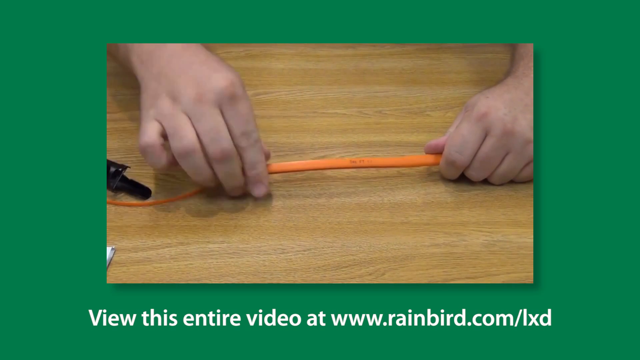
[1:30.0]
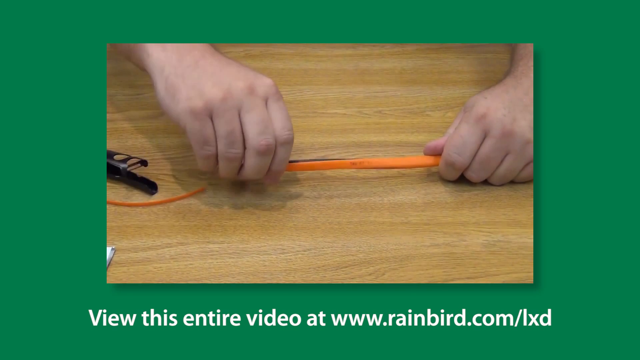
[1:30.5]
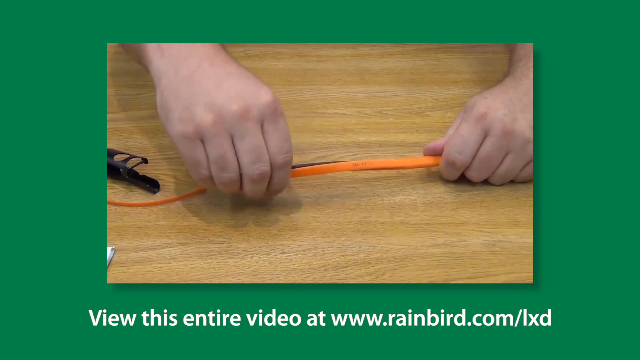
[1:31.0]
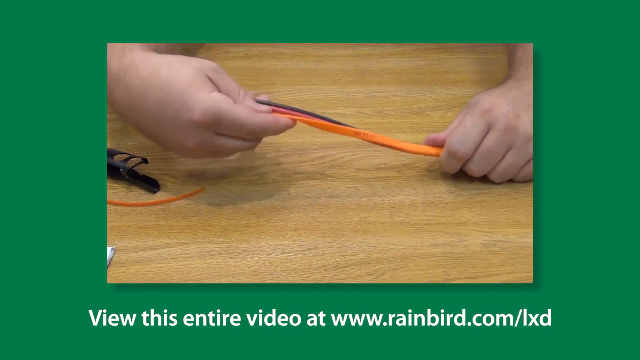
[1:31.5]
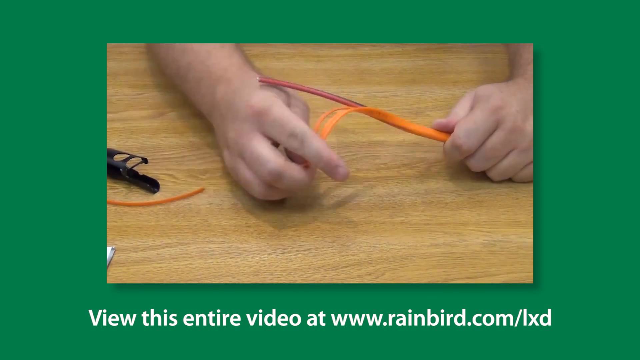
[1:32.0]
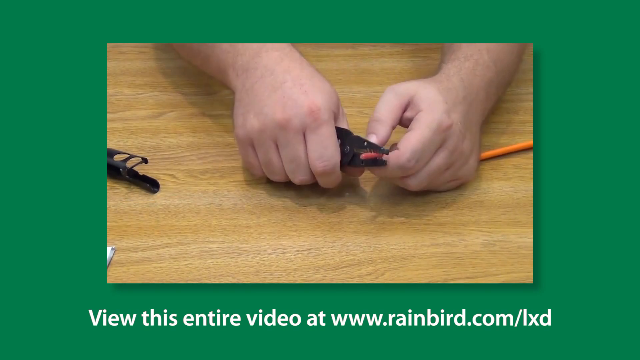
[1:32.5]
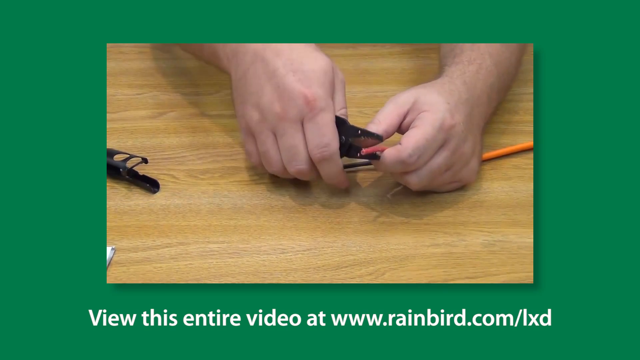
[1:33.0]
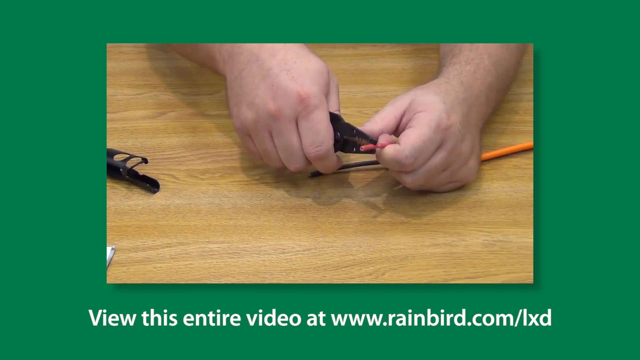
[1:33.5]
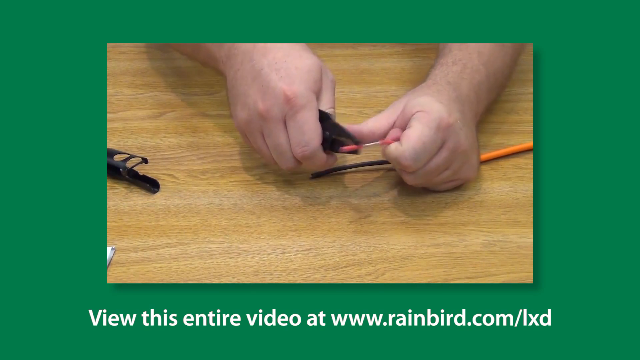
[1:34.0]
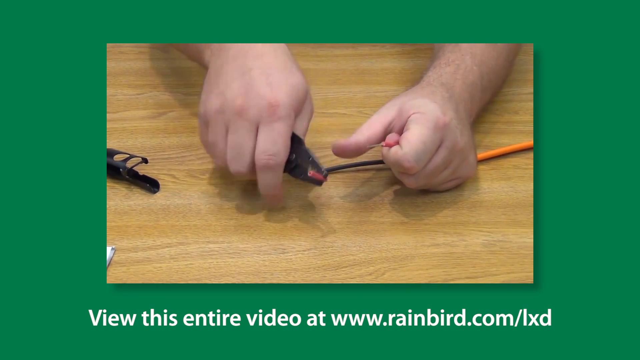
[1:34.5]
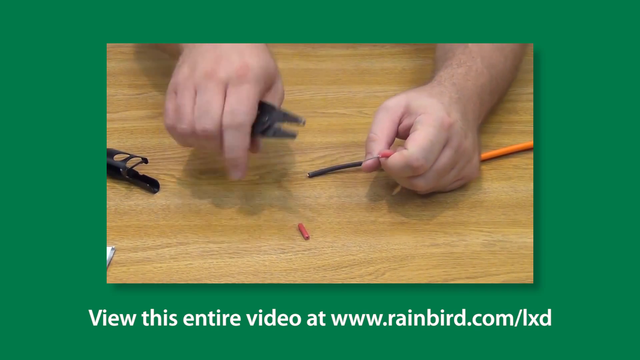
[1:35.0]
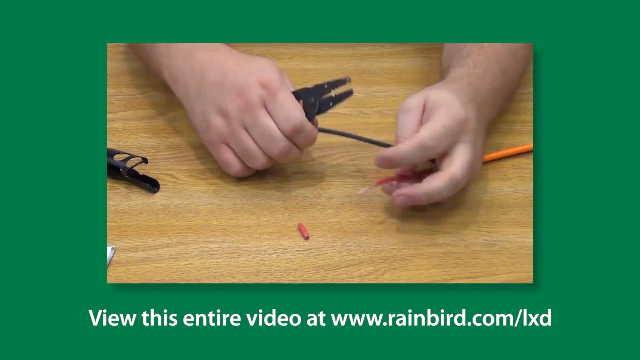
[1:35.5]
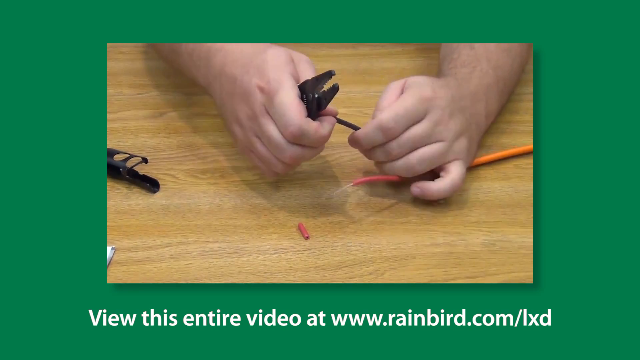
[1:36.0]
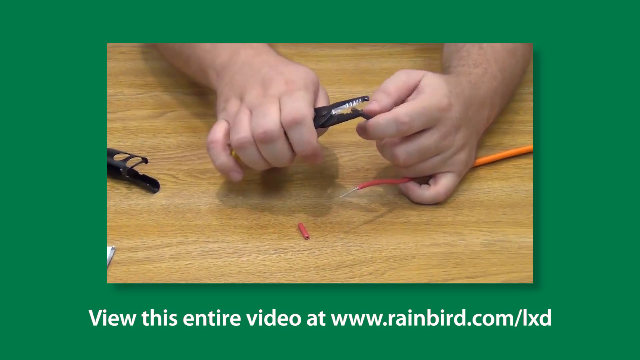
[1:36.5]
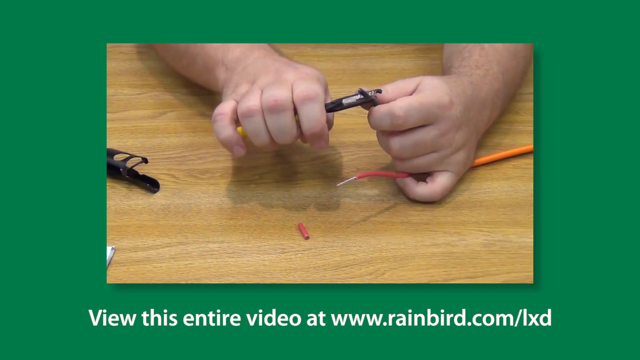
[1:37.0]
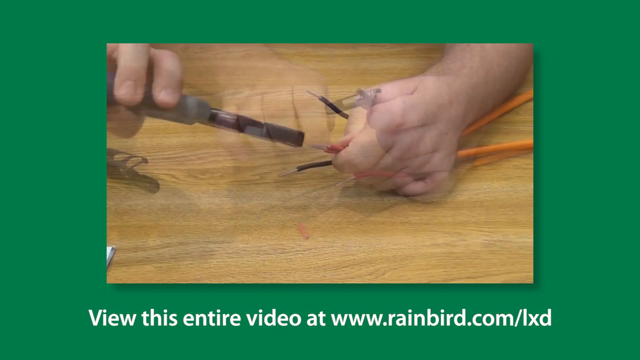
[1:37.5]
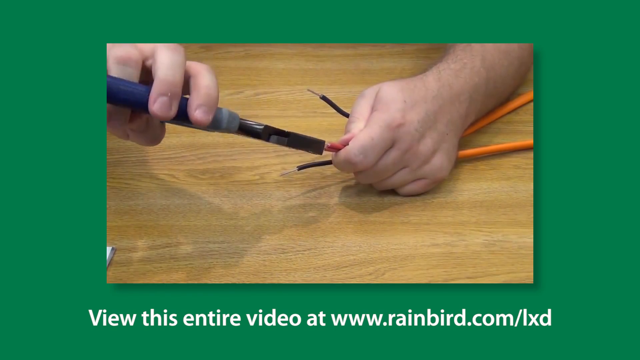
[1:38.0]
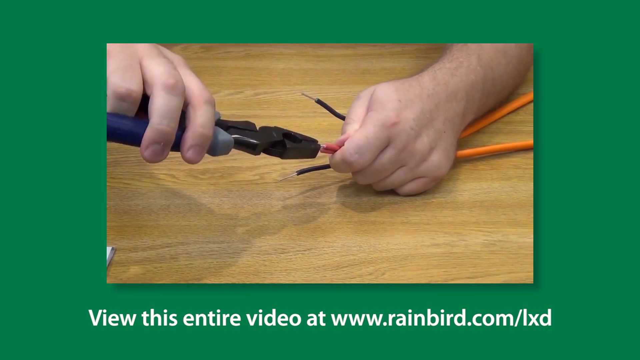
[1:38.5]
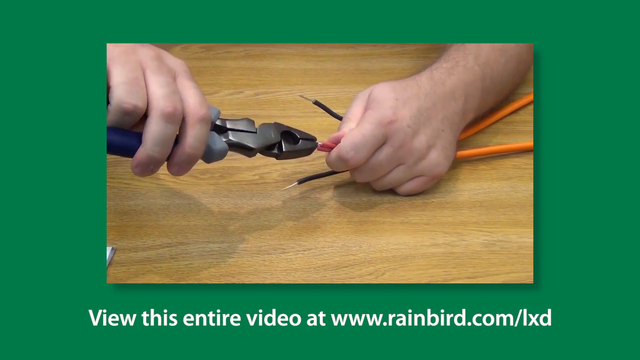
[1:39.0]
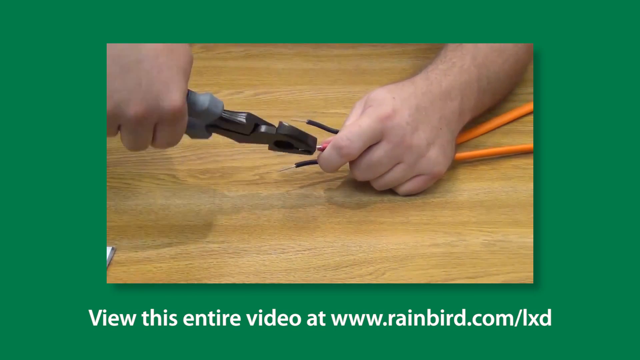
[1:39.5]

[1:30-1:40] The inset video over a green background shows an orange wire held in the left hand, with a little black cutting device lying on the table beside a piece of the cut wire. Text under the video reads "view this entire video at www.rainbird.com." The right hand takes the orange wire and begins to pull it back, exposing a red and a black wire. A pair of wire cutters cuts the red wire, exposing the copper, and the process is repeated with the black wire. In a new scene, a second orange wire is visible, with red and black wires exposed on both orange wires, making four wires, two black and two red, with copper ends exposed. The hands hold a pair of pliers and twist the red wires together.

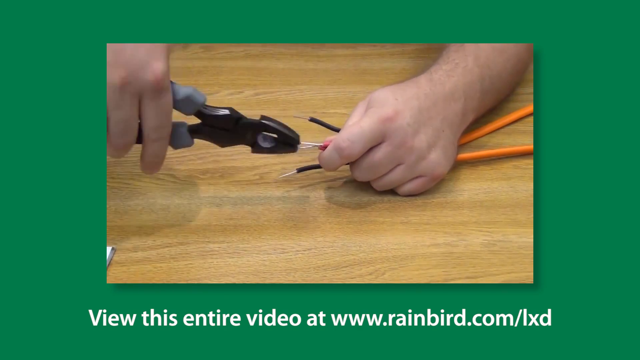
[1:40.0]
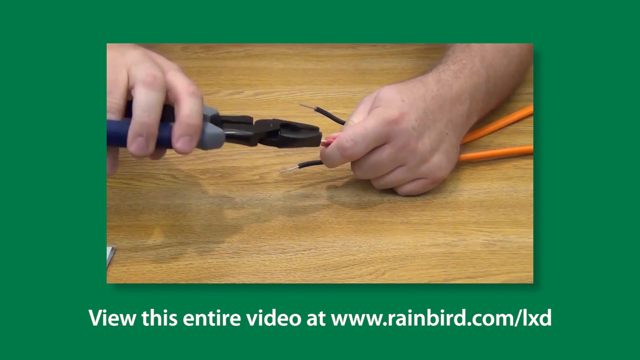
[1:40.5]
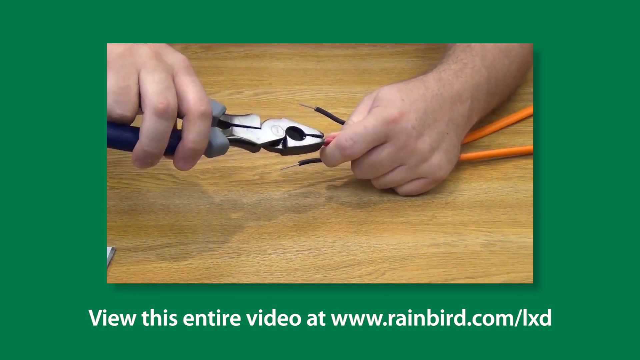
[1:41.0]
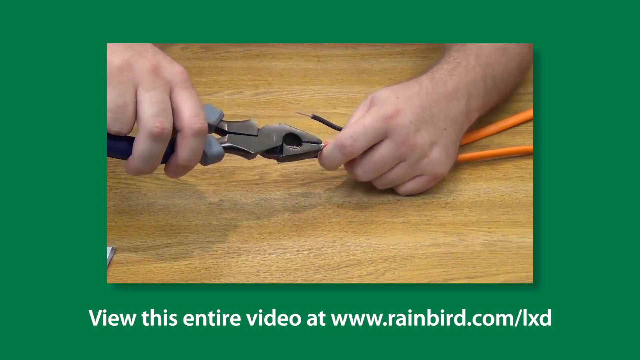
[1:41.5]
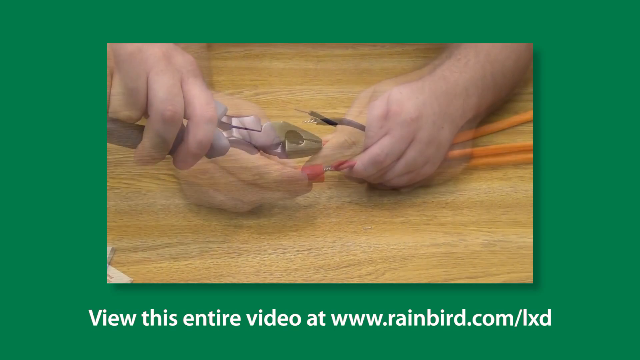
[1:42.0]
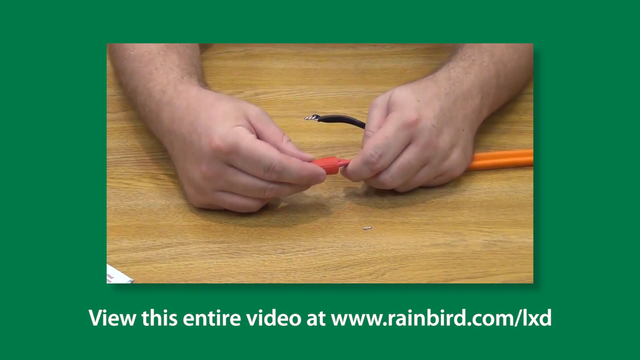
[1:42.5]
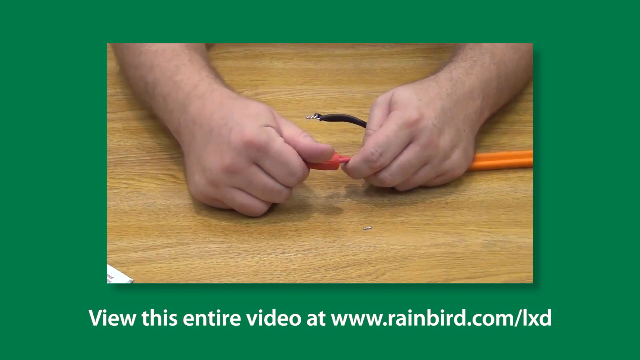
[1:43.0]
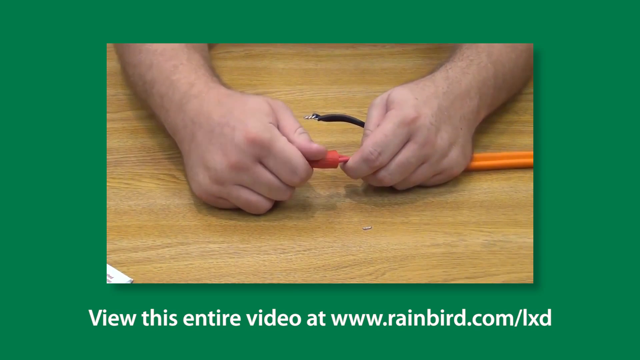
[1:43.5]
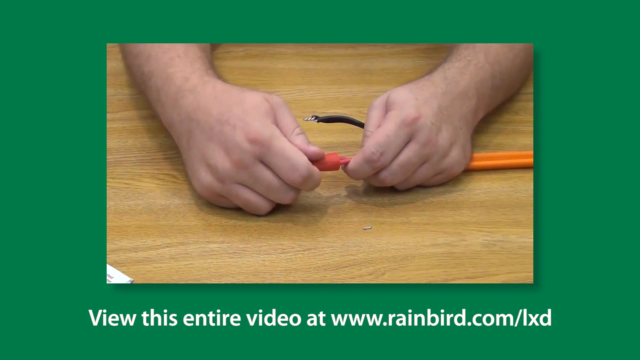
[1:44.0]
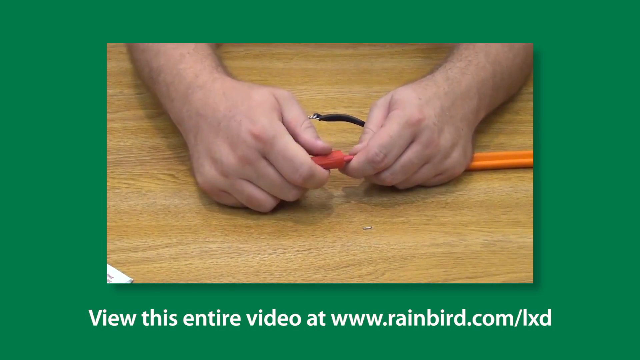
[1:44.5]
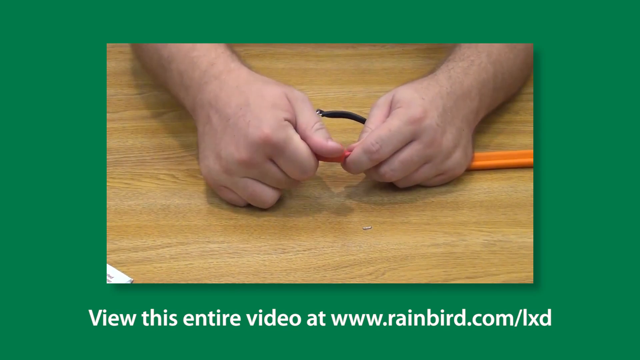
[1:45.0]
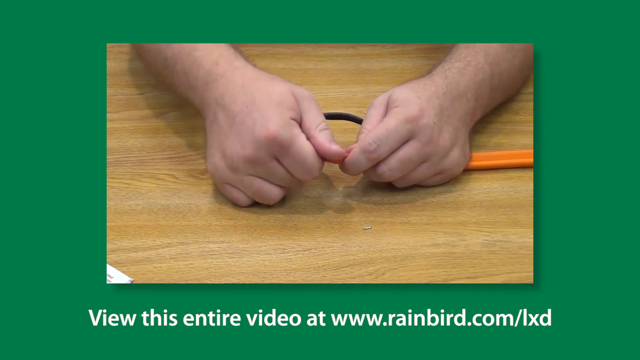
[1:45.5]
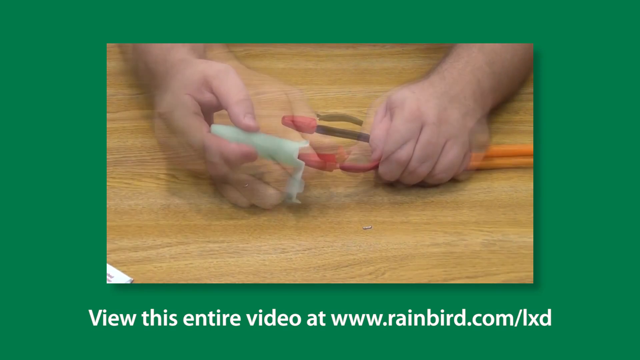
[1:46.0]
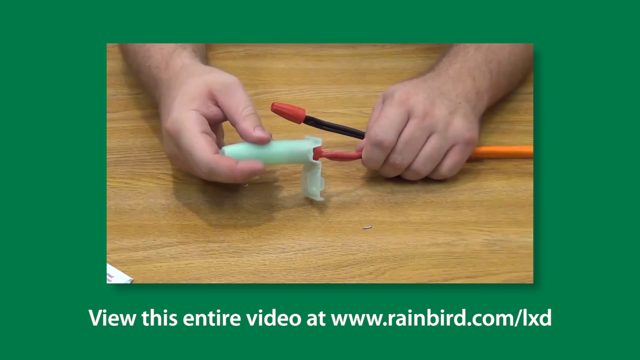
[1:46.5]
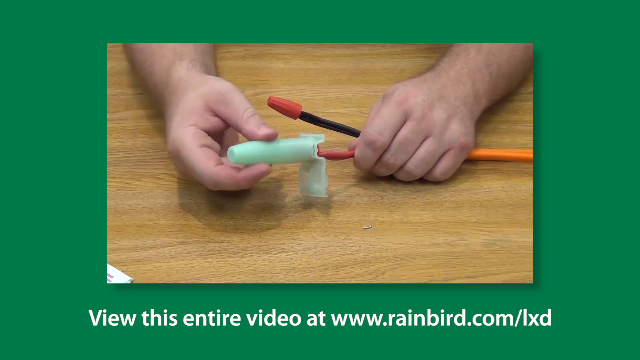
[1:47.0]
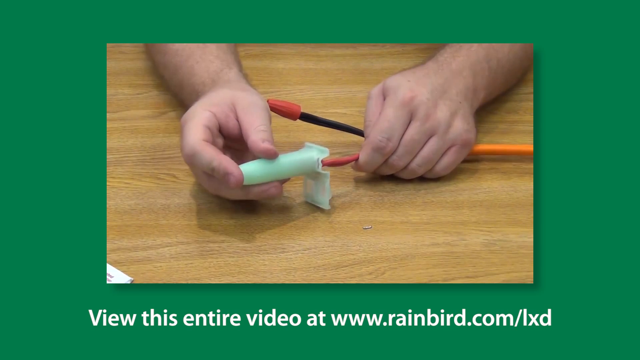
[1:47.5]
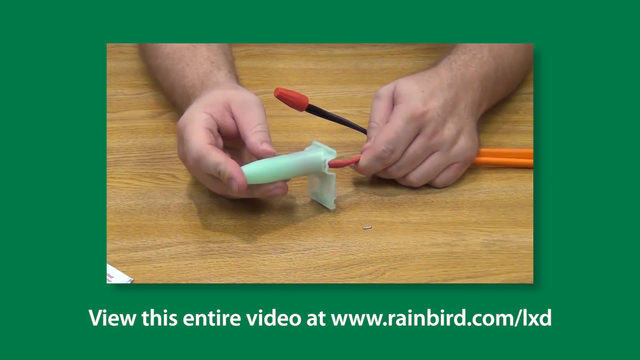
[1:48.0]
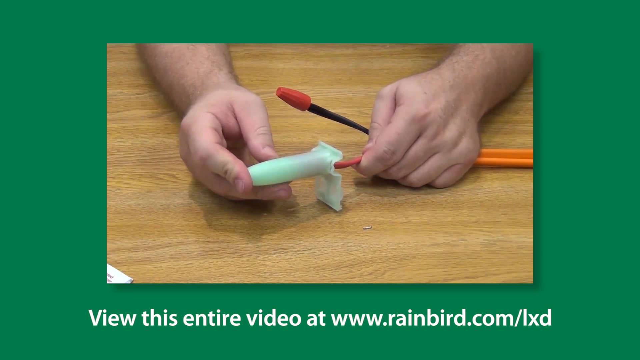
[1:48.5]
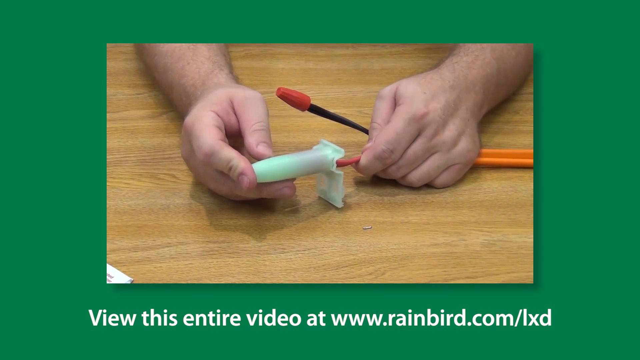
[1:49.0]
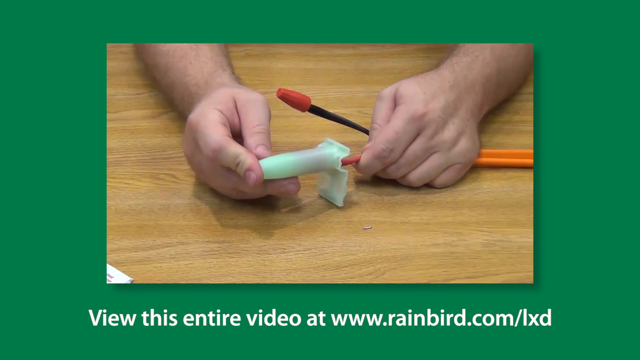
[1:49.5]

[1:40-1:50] The inset video on a green background has text at the bottom reading "view this entire video at www.rainbird.com/lxd." The hands hold two red wires; two black wires with exposed copper ends and the two orange wires being worked on are also visible. The right hand holds a pair of black pliers with blue rubber handles, twisting the red wires together. Next, with the red and black wires twisted together, the hands hold a red cap and screw it onto the red wires. Then, with the black wires already done, they put a blue plastic device over the red wire; the device has a cavity and a little tab to the right of it.